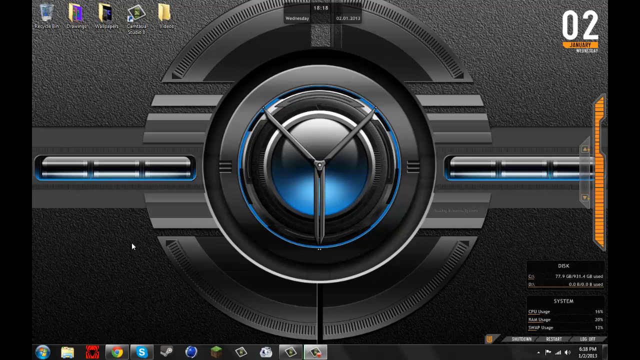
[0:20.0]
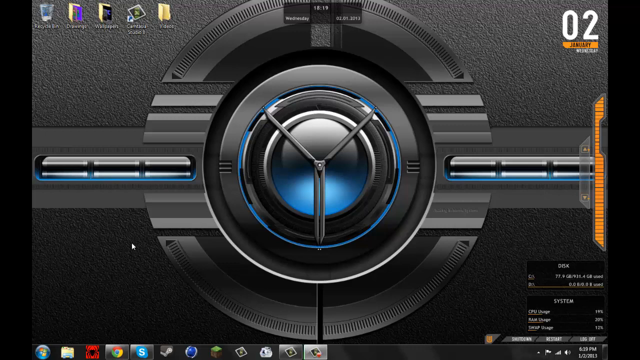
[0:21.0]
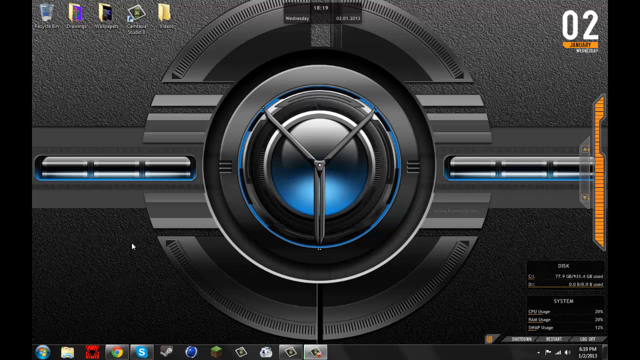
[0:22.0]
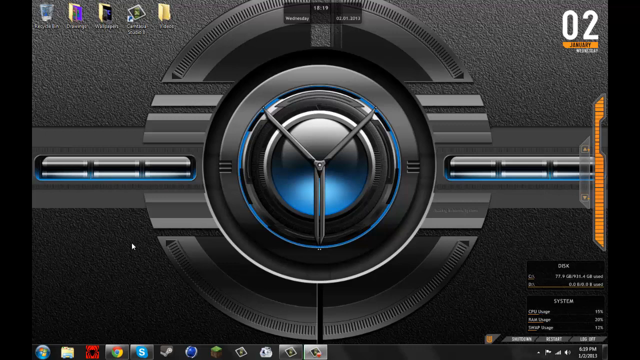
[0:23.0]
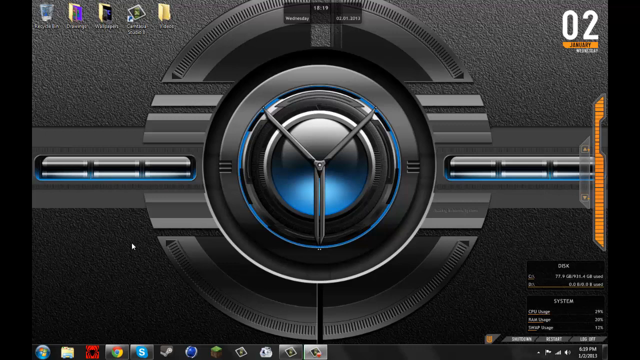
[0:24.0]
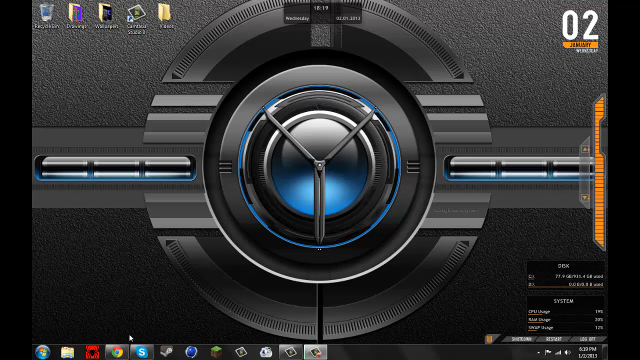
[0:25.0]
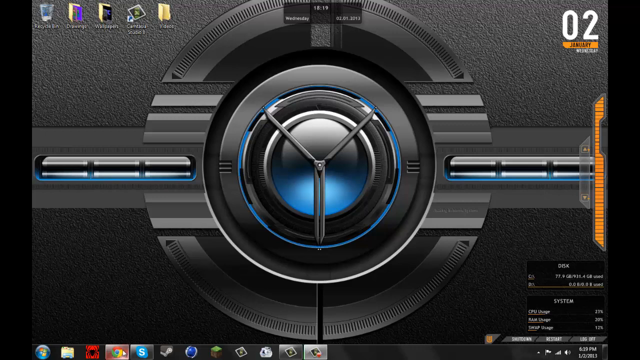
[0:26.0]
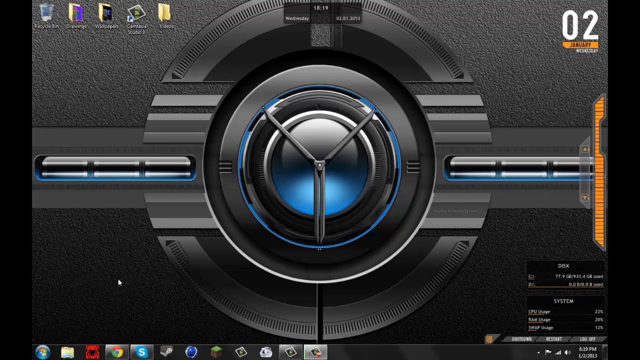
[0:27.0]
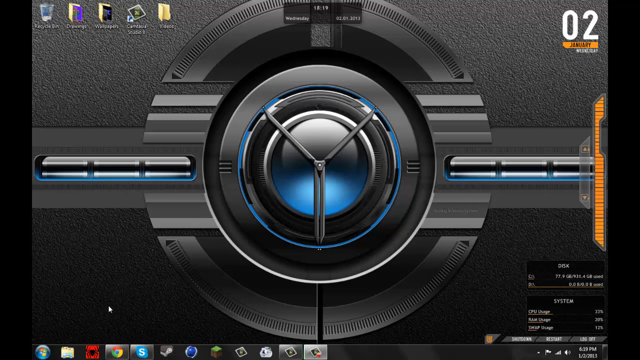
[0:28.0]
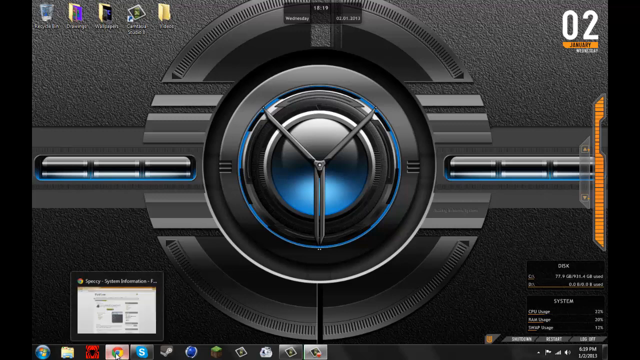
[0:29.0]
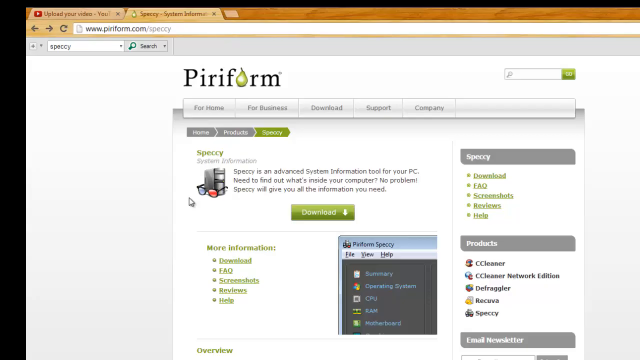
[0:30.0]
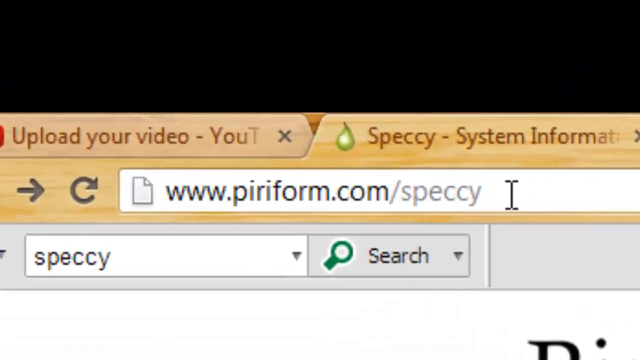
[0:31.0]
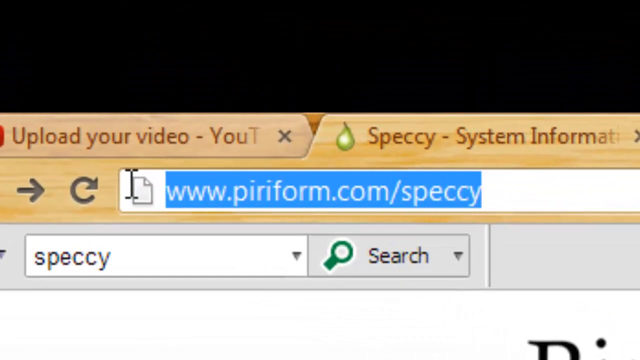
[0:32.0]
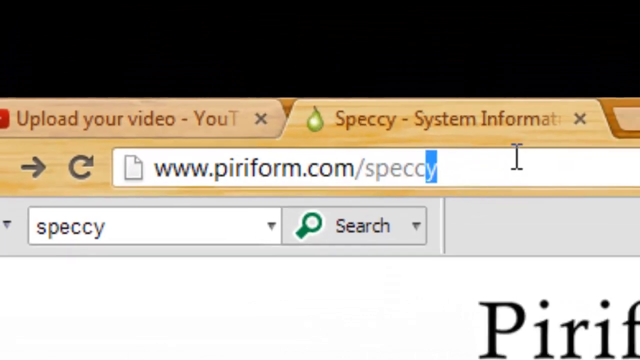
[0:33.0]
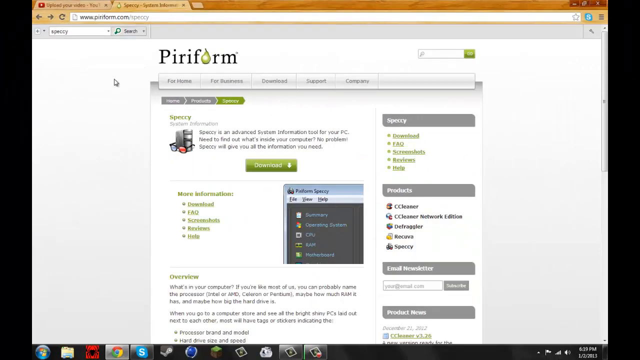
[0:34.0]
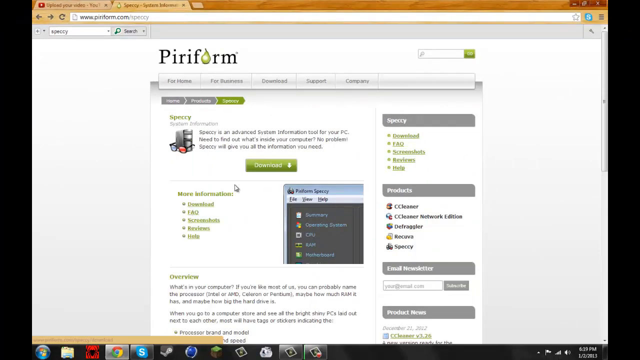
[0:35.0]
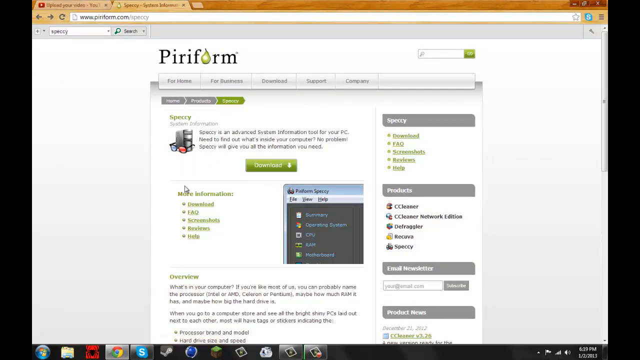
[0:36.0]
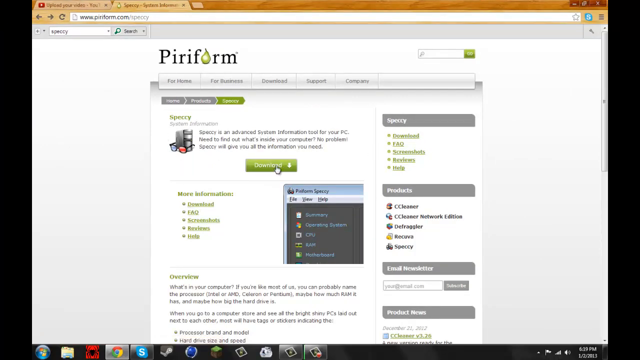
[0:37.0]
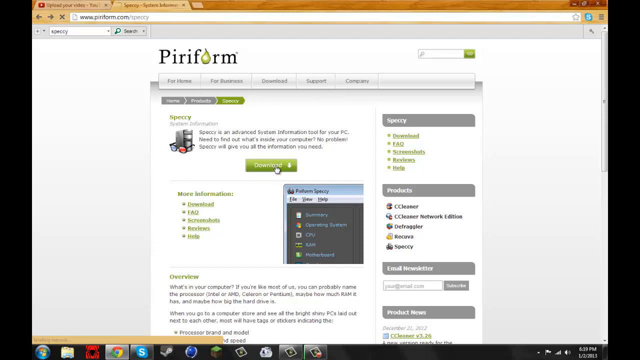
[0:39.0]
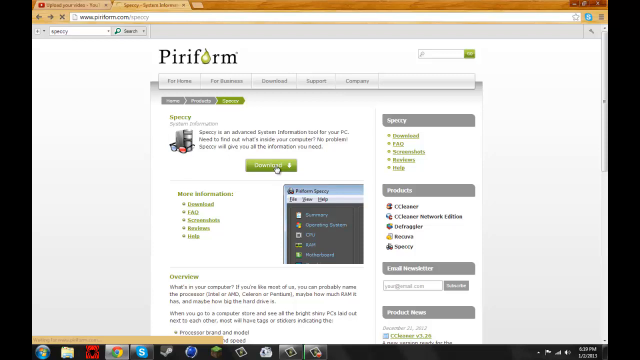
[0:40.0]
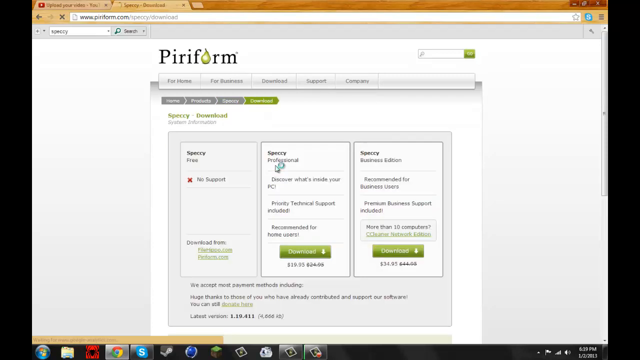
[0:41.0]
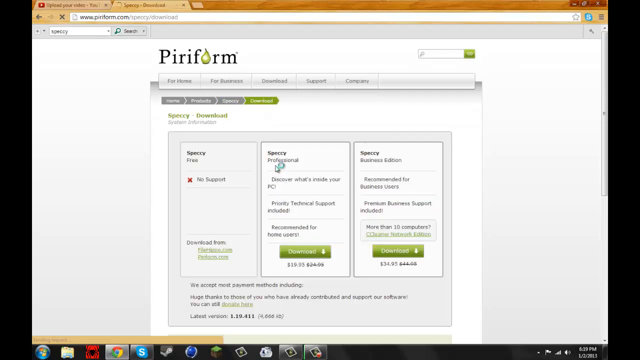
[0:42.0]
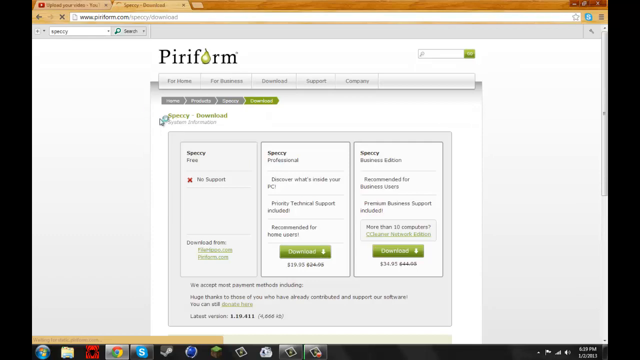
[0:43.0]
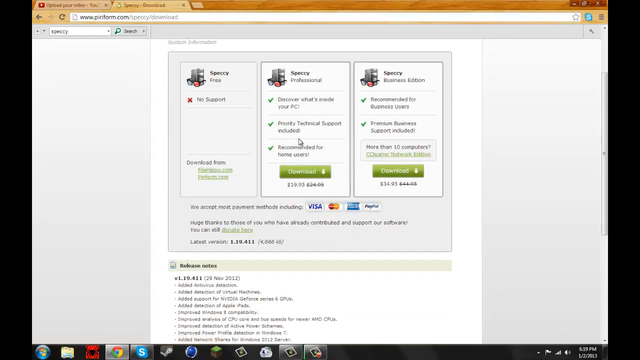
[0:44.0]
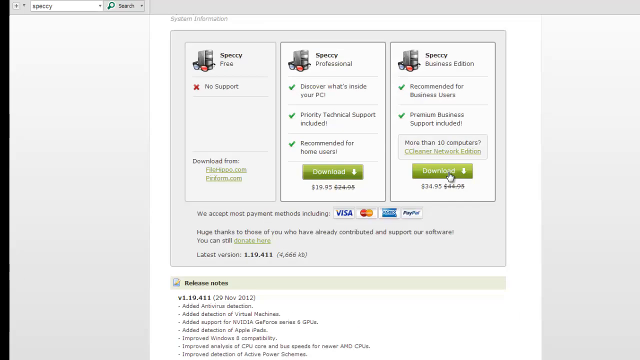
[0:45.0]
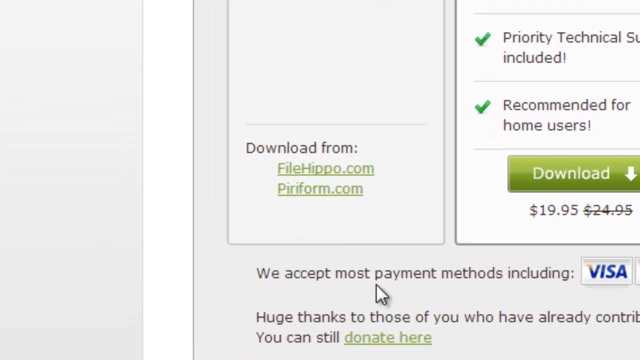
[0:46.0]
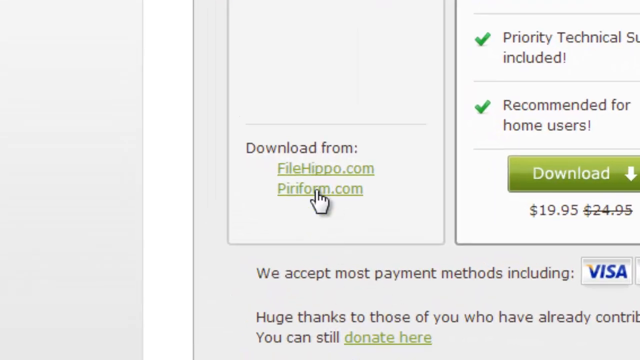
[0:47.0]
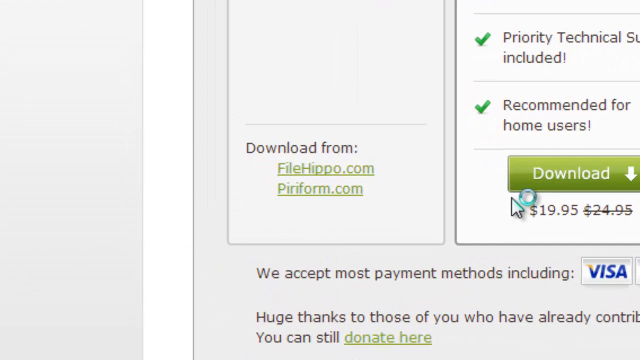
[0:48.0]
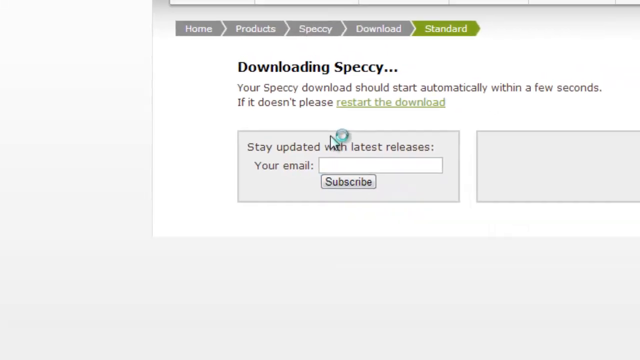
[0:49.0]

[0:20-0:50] On a desktop or laptop computer that appears to be running Windows Vista, Google Chrome and what looks like Skype are among the icons. The cursor hovers over Google Chrome for a second, then Chrome opens to pitform.com, apparently the site's home page. There is an option to download, and the user clicks the download button. Another screen appears that says "spiky" and lists different options: one is completely free and two others cost money. The prices are hard to see, but payment options include Visa, MasterCard, PayPal and another option. The download is offered from filehippo.com or prior form.com, and he clicks the latter. Then he goes back to his desktop.